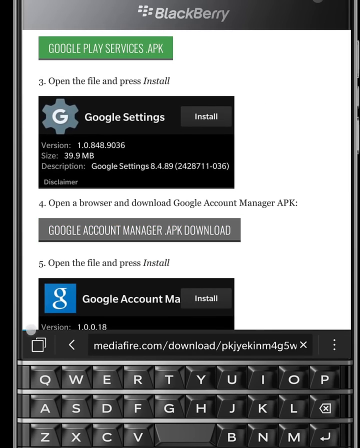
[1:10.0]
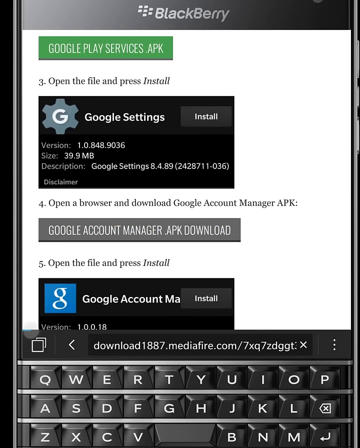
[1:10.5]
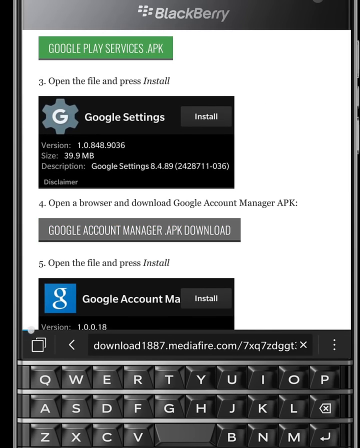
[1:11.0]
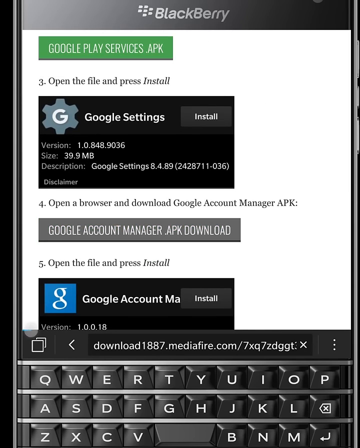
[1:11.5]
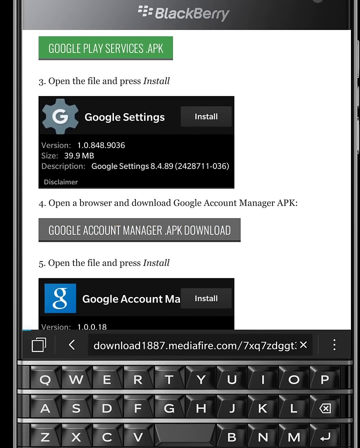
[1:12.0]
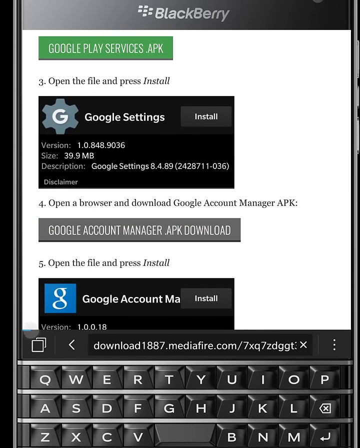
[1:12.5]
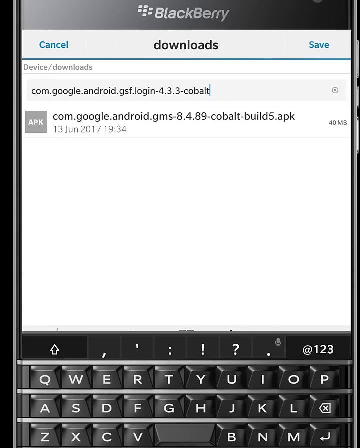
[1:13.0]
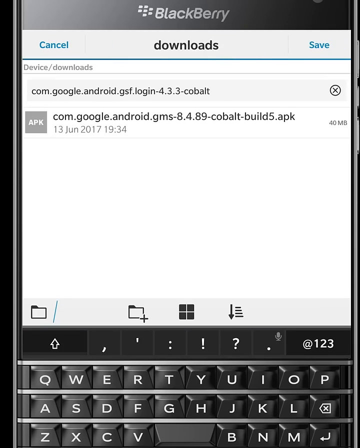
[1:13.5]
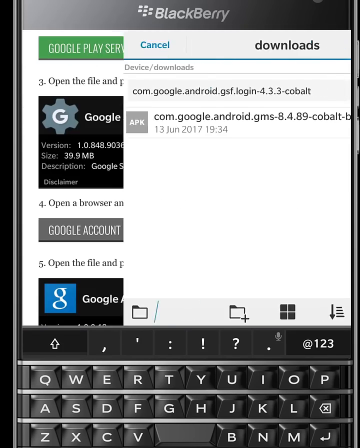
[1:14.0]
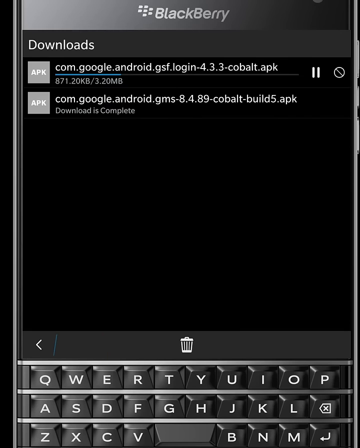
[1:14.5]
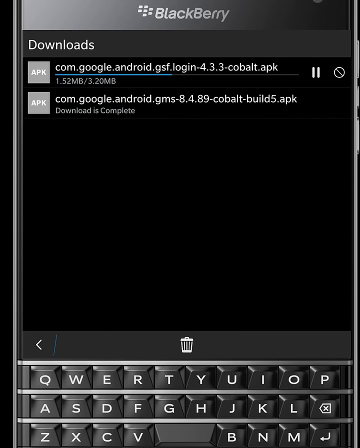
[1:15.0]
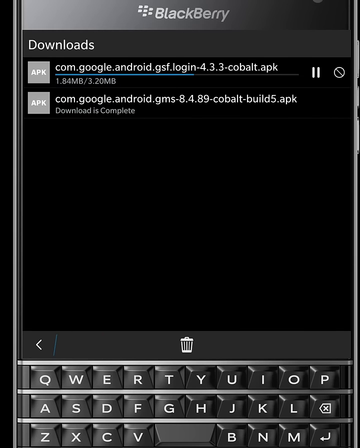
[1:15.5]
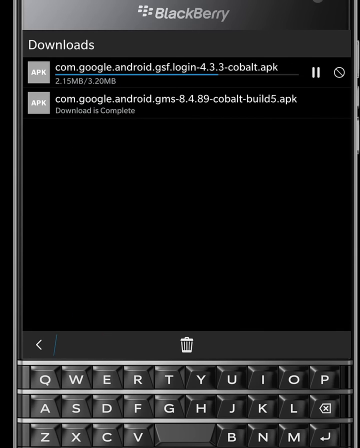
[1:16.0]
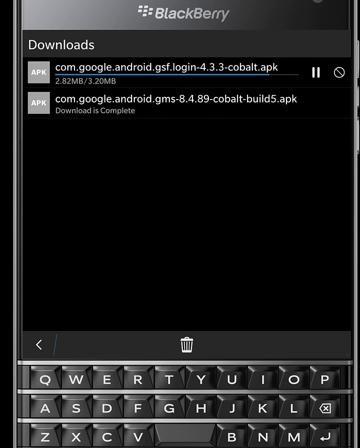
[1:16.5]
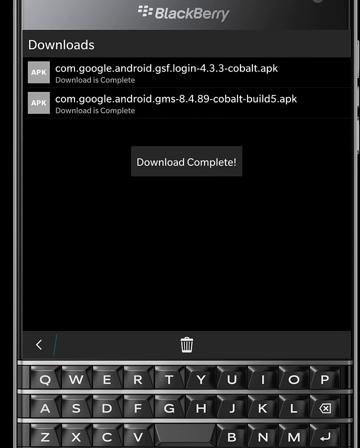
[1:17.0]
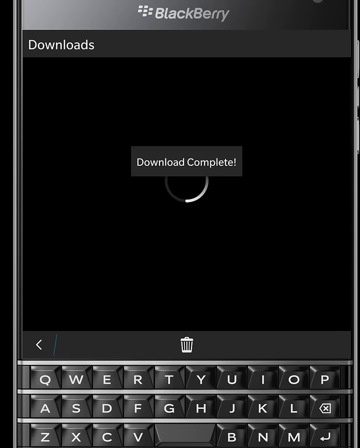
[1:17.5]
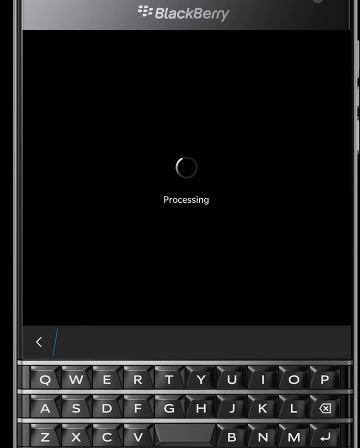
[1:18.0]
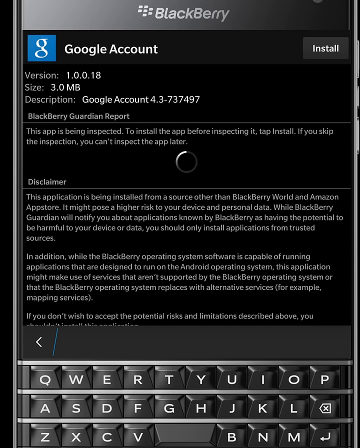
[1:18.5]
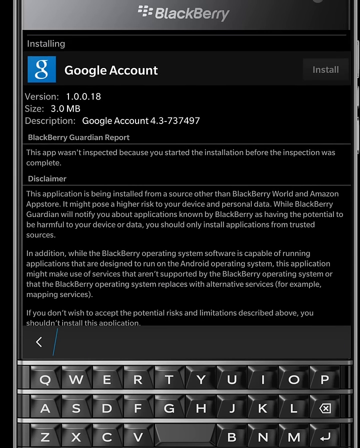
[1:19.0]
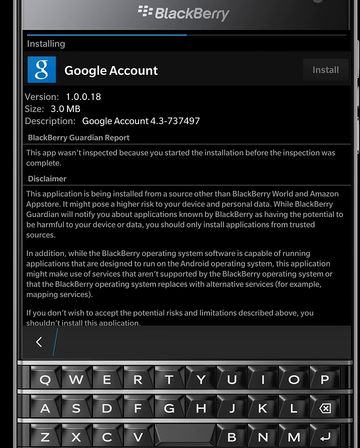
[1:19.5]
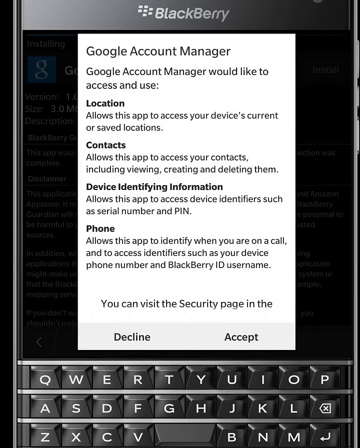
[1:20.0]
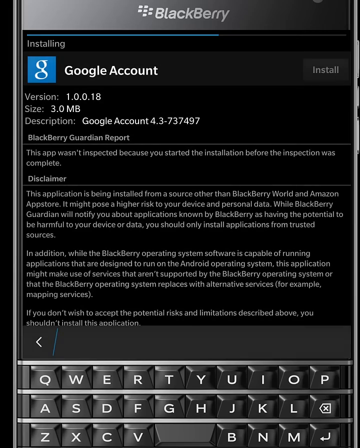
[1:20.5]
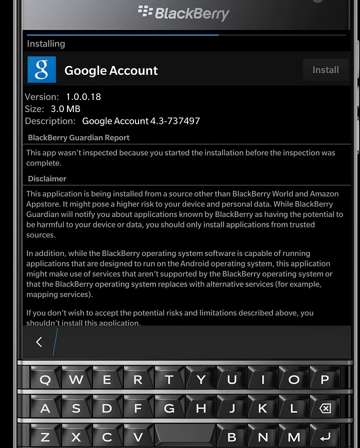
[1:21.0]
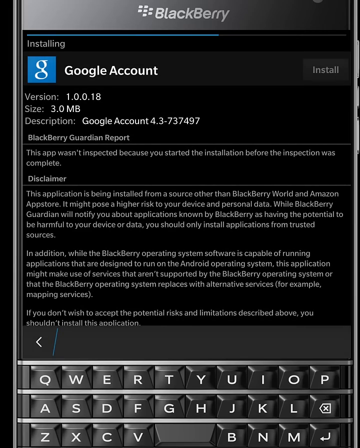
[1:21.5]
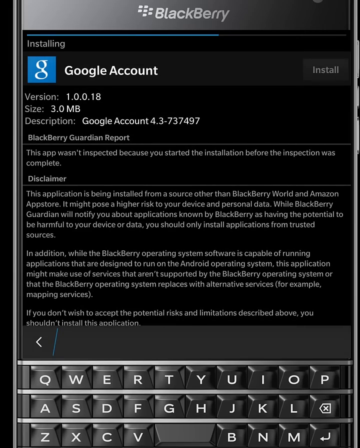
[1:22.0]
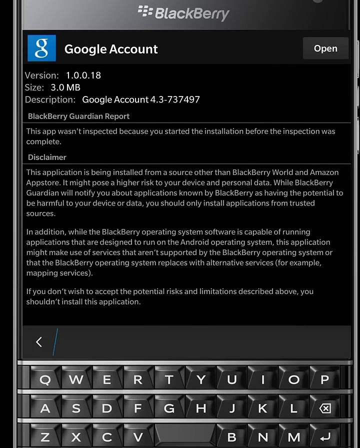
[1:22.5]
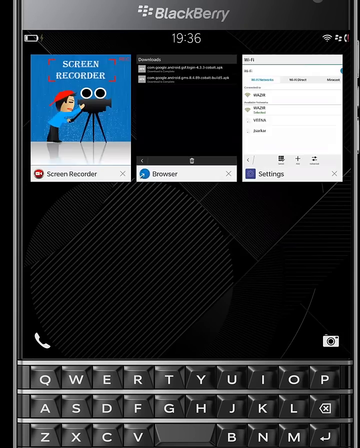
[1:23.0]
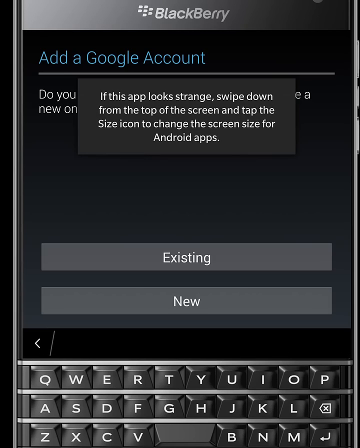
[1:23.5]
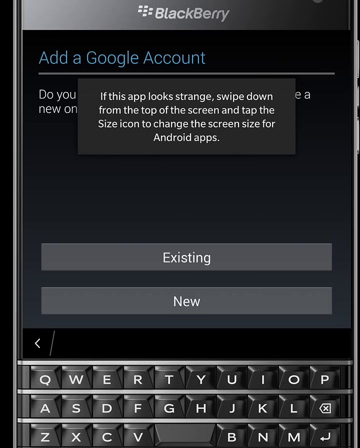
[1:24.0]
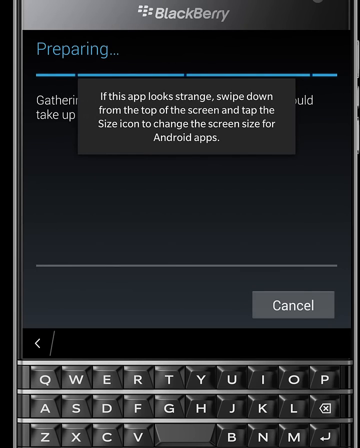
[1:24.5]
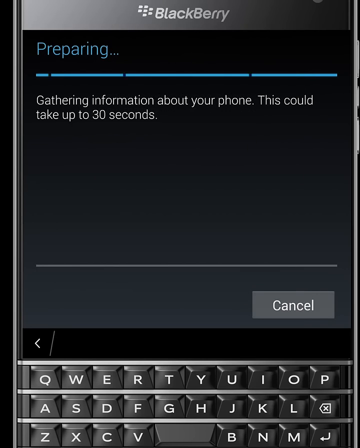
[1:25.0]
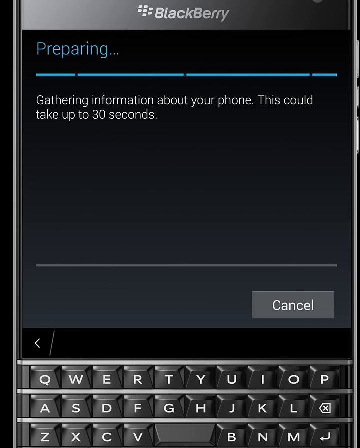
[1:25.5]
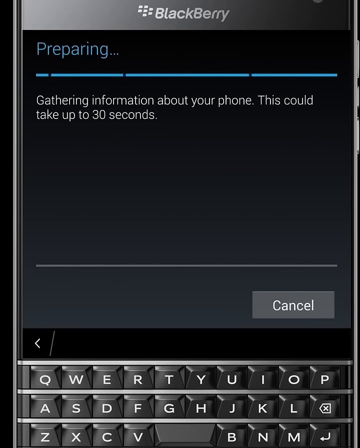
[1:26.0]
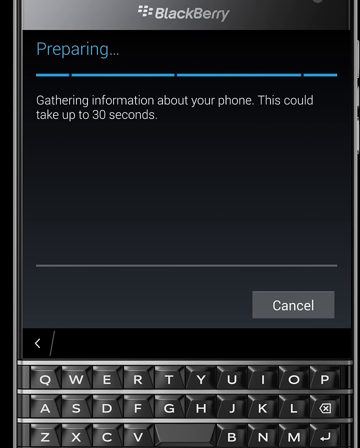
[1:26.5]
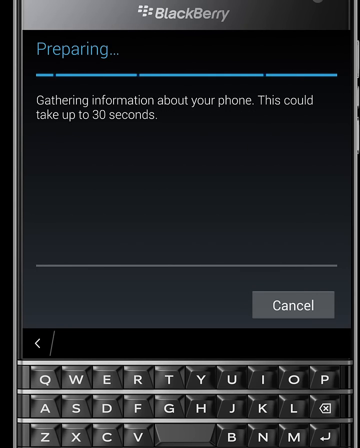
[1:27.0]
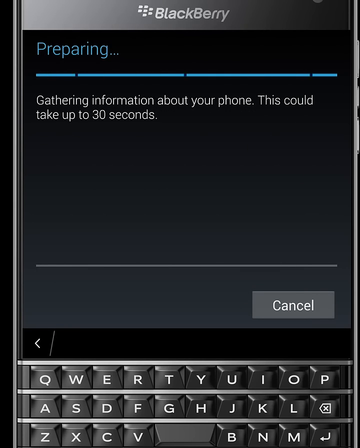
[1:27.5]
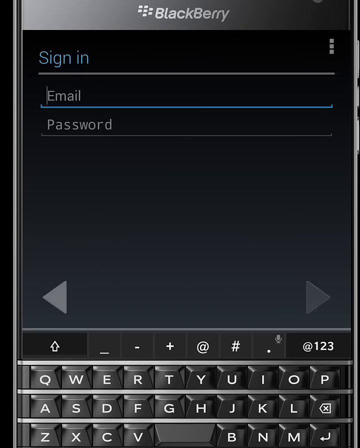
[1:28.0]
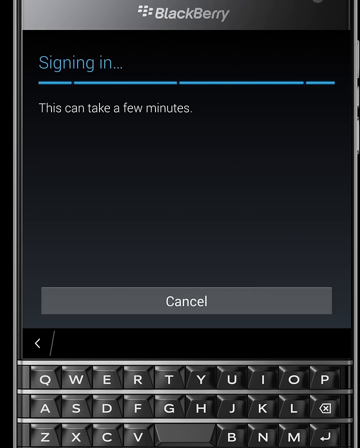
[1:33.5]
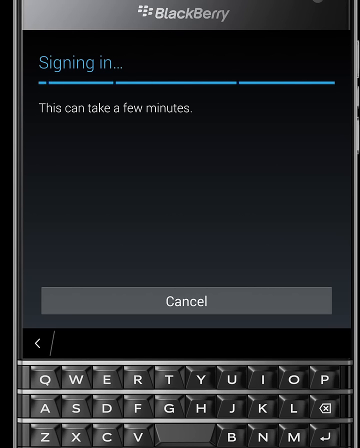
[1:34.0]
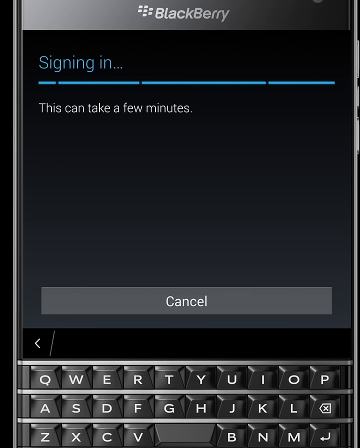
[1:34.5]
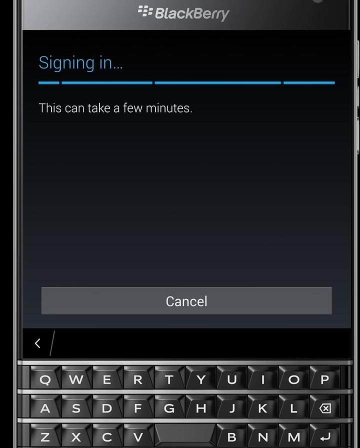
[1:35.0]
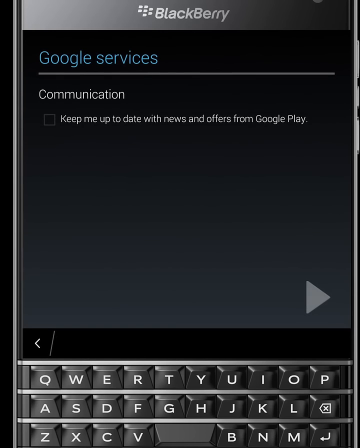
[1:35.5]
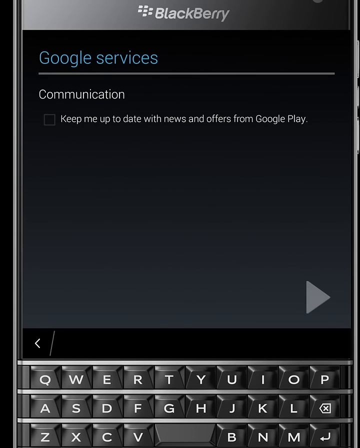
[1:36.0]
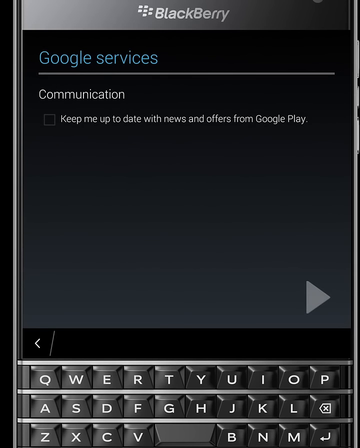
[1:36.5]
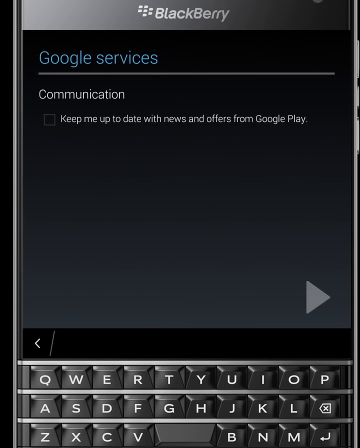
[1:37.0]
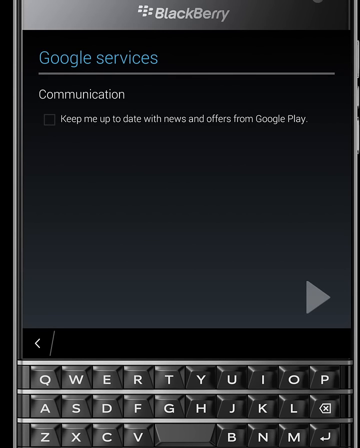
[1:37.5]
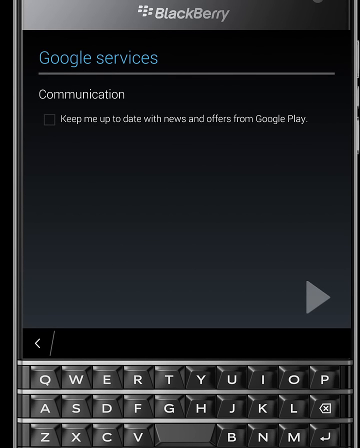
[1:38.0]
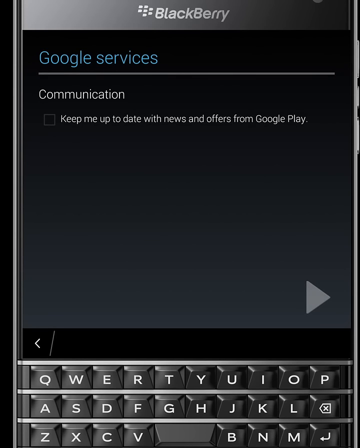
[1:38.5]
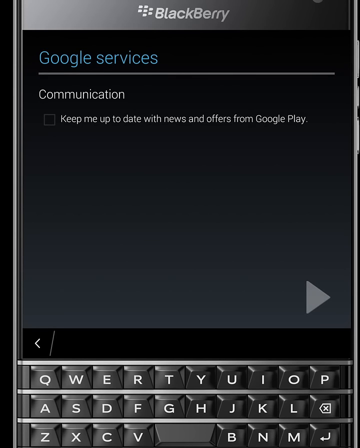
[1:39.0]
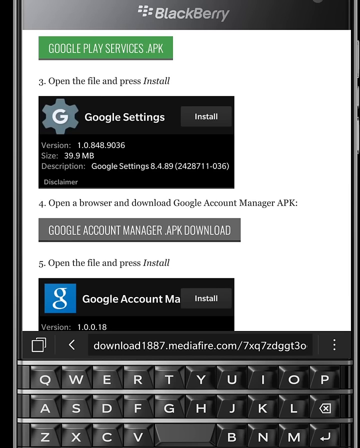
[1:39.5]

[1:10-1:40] The user goes into their downloads, and something appears to be downloading again as the same screens keep coming back. It looks like it will take some time. No login is shown. Two things are downloading; the second one finishes and appears above the first. Some information about security appears, and the user seems to check information settings on the phone to complete the download. The downloads move quickly.